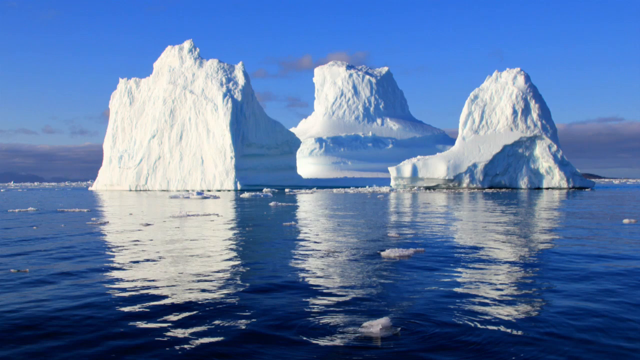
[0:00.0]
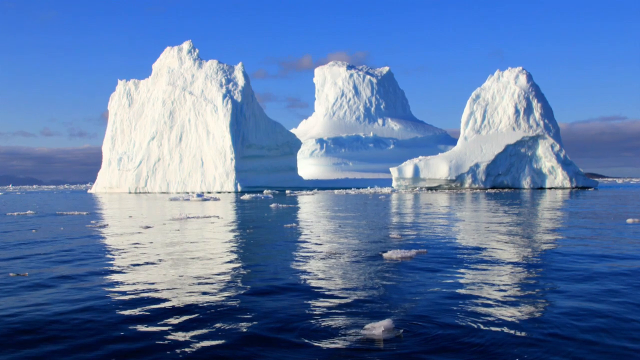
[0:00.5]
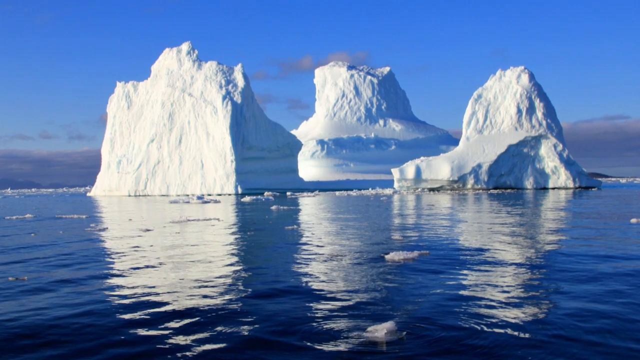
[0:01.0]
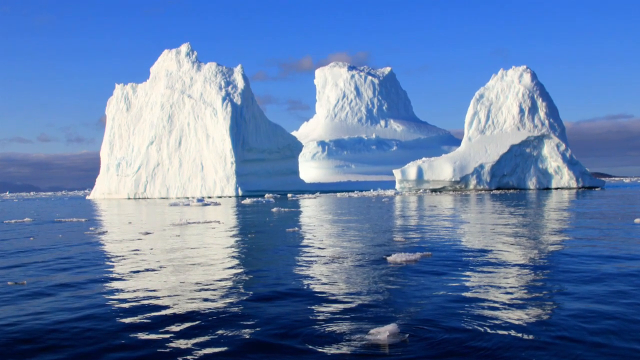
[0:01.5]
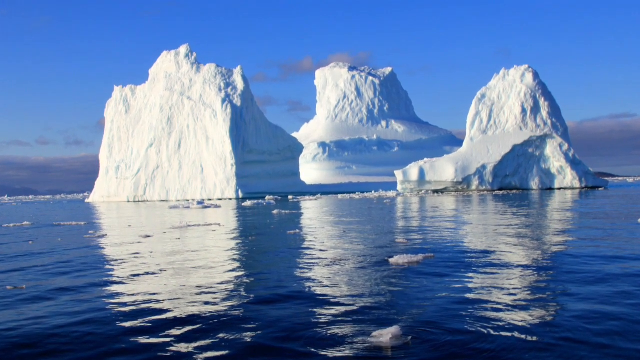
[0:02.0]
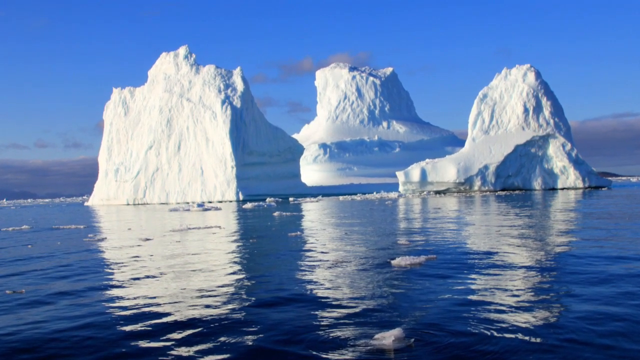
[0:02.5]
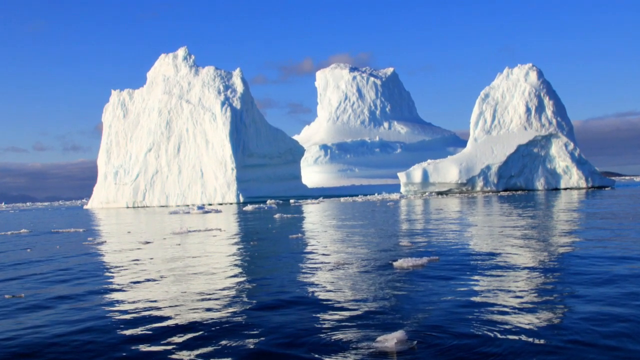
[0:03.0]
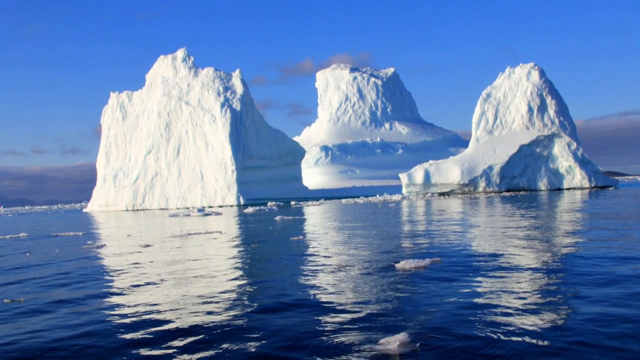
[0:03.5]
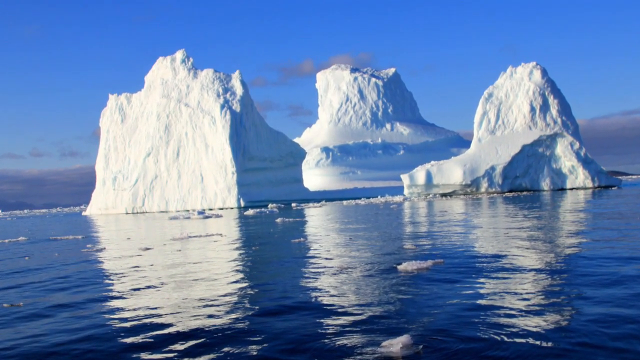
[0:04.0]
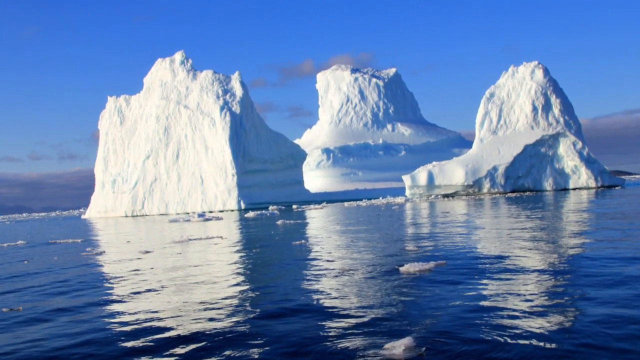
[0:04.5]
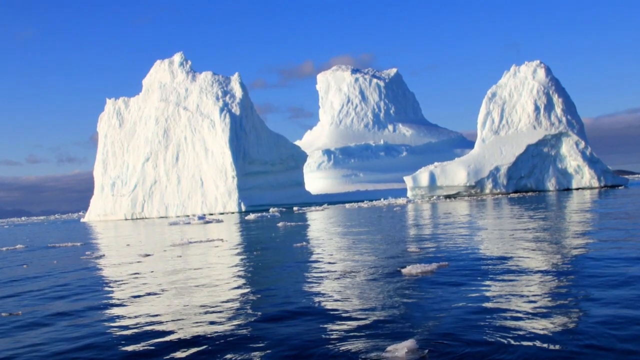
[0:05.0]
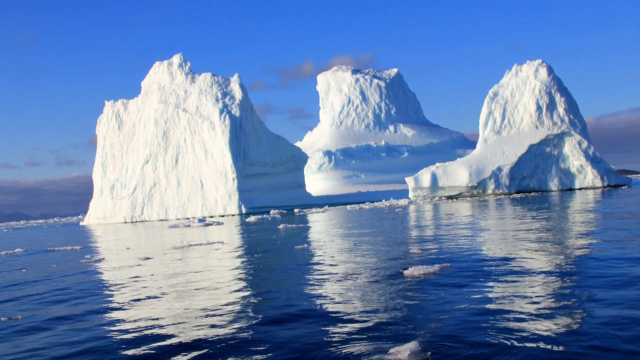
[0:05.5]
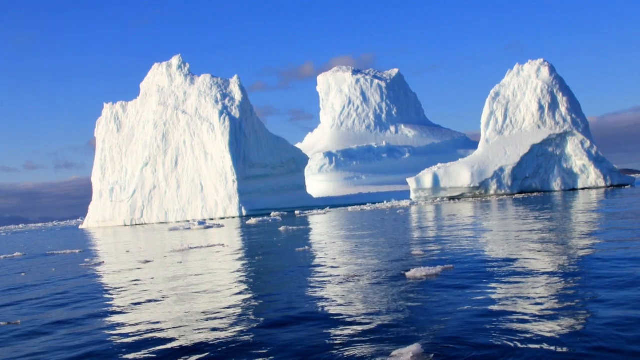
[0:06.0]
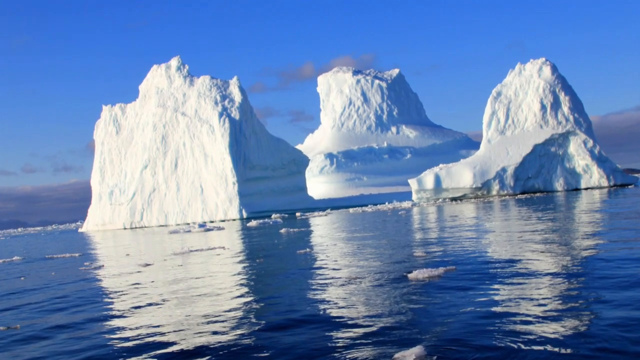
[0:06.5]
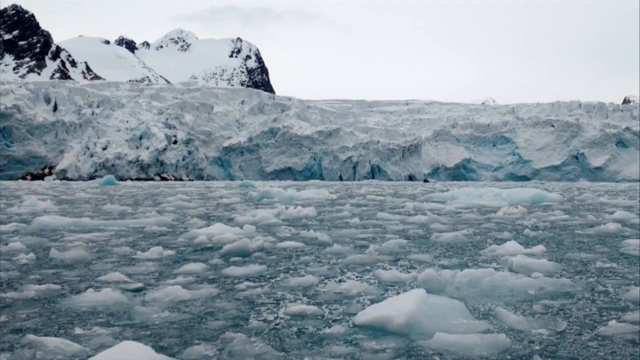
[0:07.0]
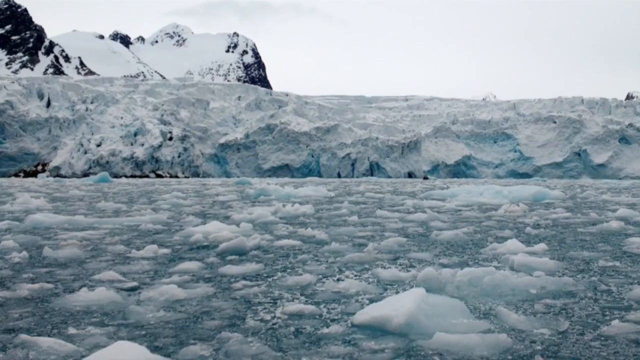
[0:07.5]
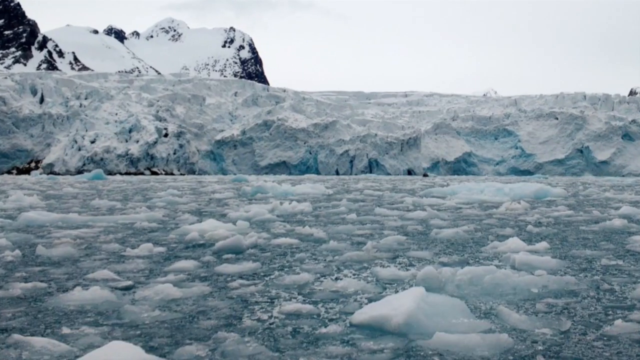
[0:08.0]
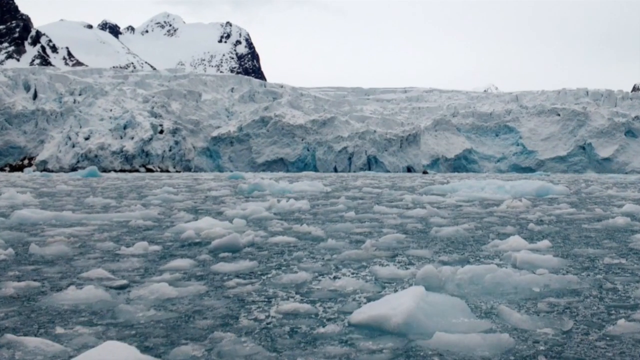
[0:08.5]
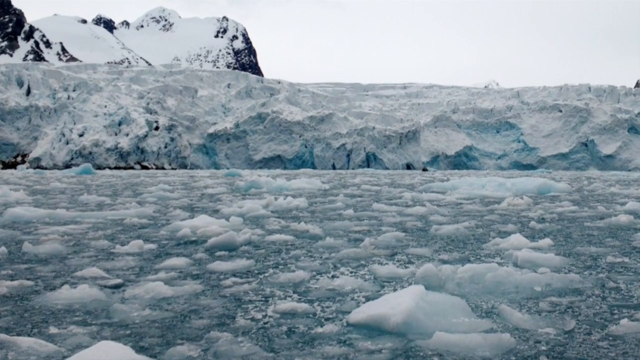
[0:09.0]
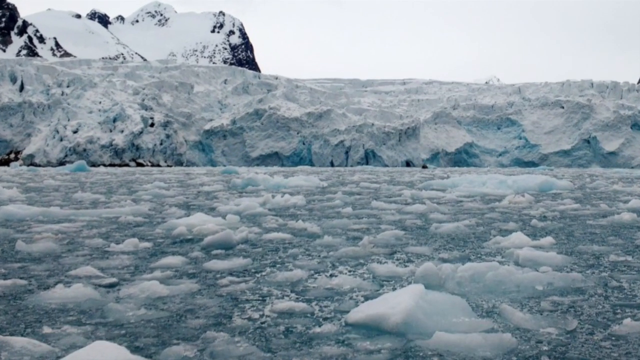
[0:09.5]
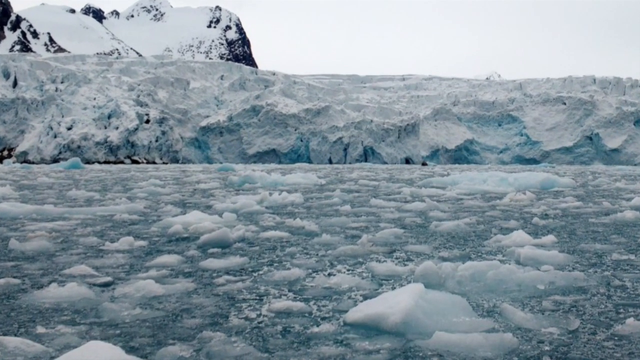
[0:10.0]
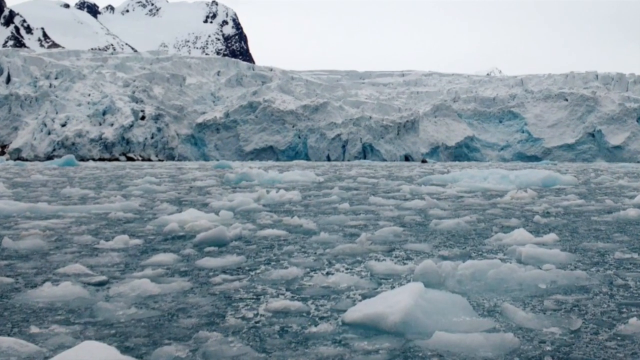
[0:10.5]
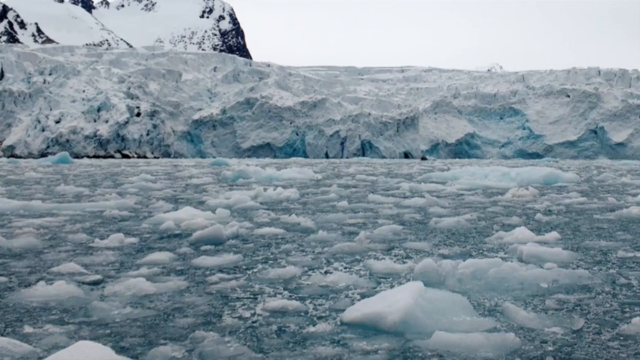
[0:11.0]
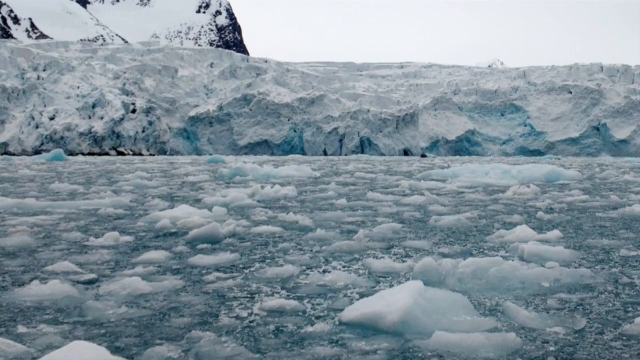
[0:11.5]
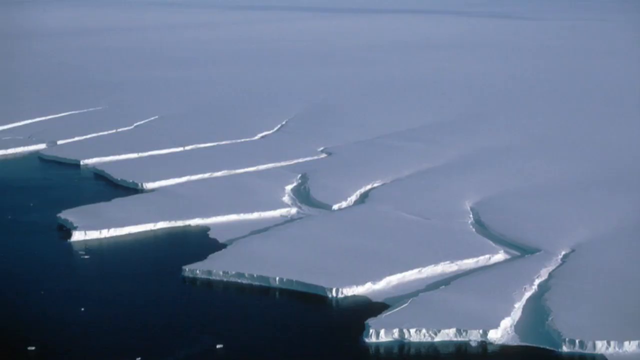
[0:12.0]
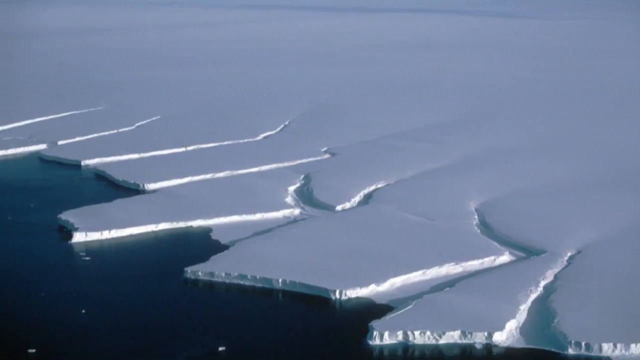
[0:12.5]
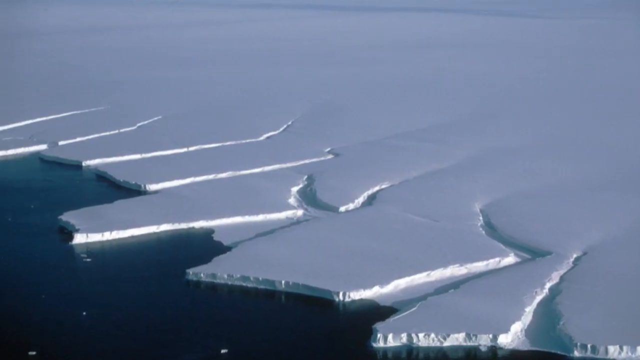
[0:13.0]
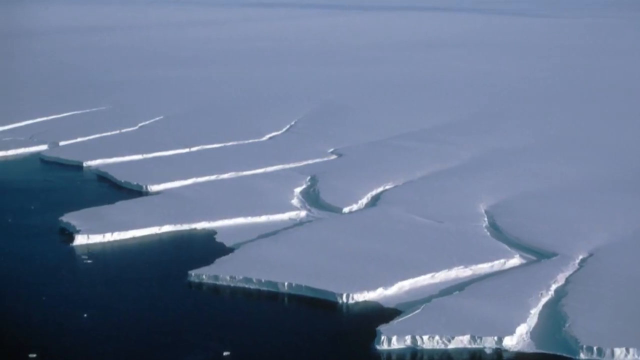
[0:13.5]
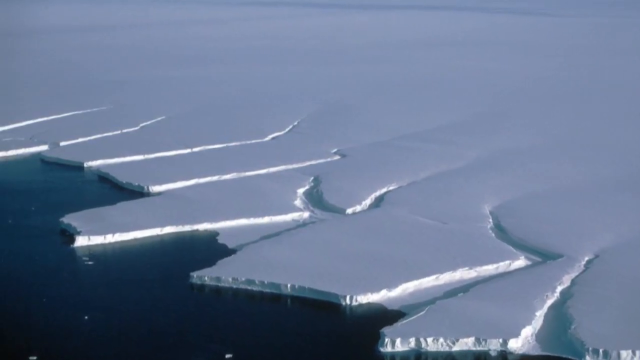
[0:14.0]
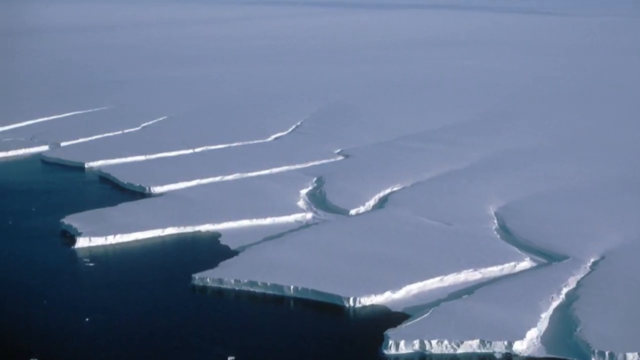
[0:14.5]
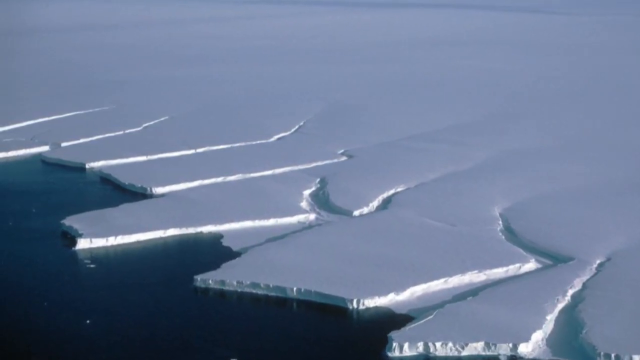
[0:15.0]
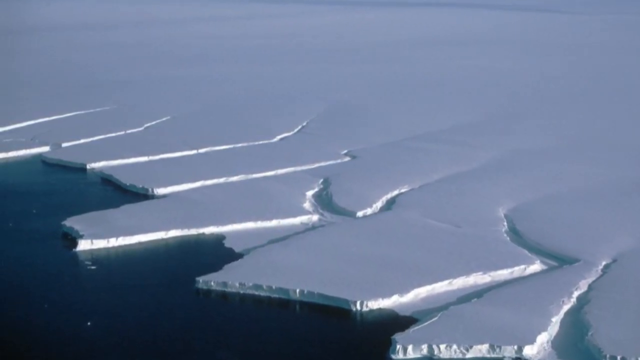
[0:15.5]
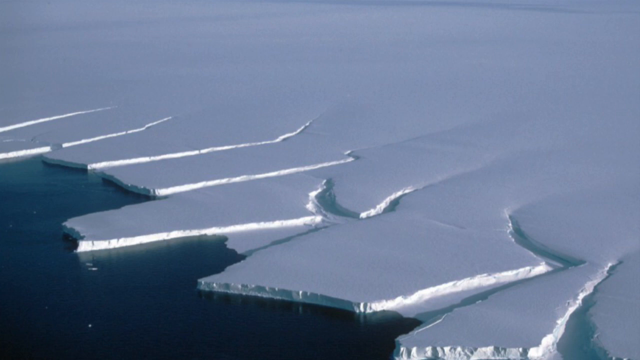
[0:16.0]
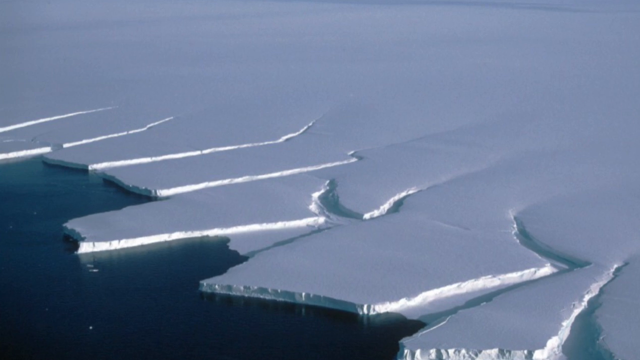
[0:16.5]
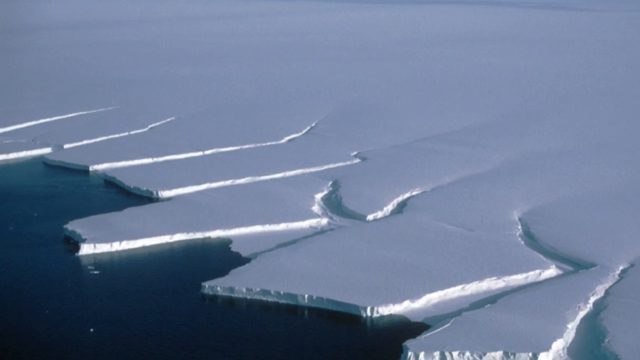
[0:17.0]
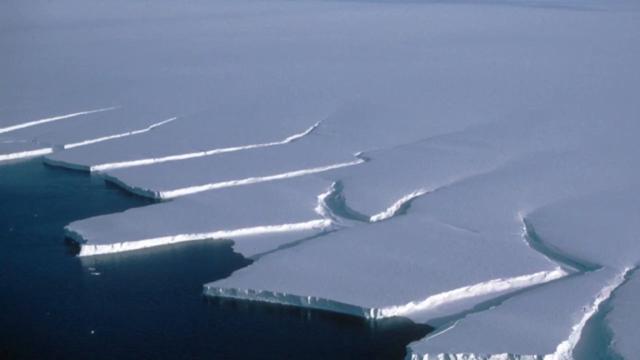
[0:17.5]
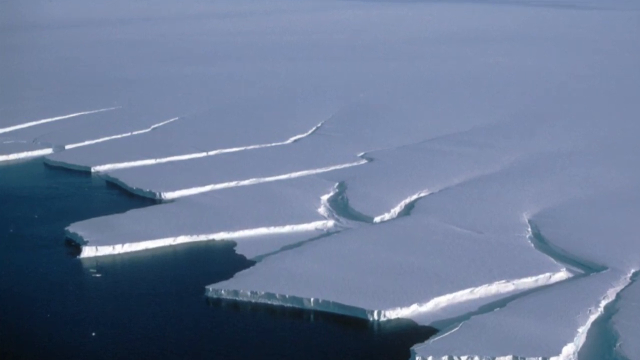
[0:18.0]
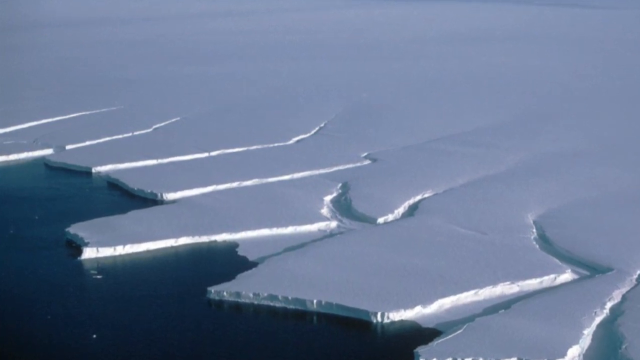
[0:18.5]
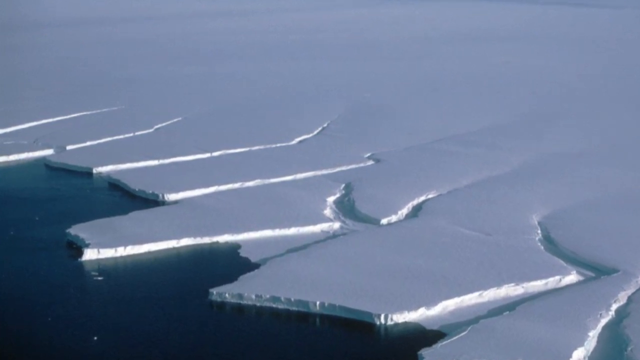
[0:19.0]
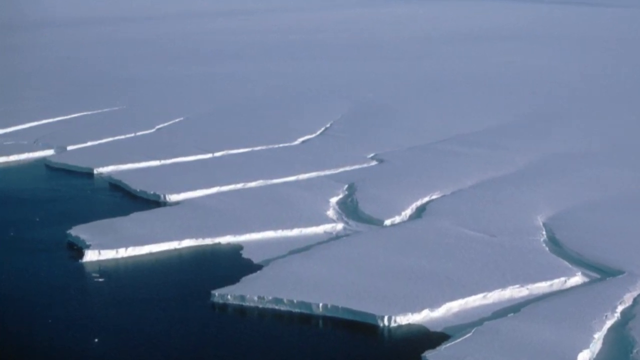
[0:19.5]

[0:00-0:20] The video opens on an image of three large icebergs in the middle of the ocean under a bright blue sky with some small clouds. The icebergs are reflected in the crystal-clear, striking blue water. The view changes to smaller icebergs in the ocean, hundreds of them, and then to a large ocean covered with a large portion of snow and ice. Smaller mounds of icebergs are scattered along the water; they are pyramid-shaped and all of equal size and shape. An image shows a large expanse of water largely covered with snow and ice, the untouched snow settled upon the very deep blue water.